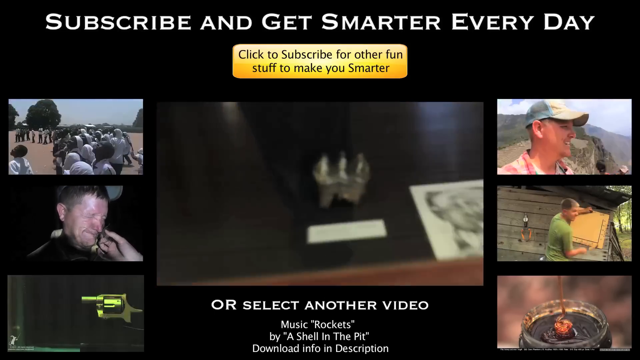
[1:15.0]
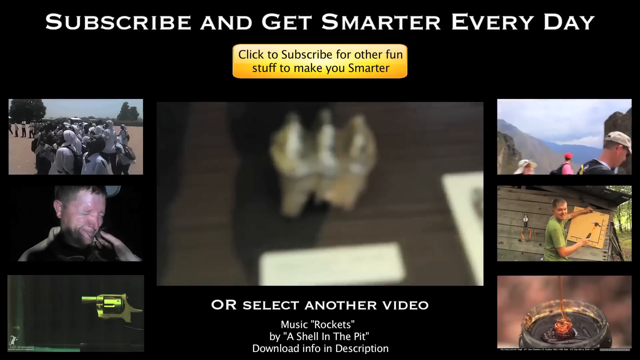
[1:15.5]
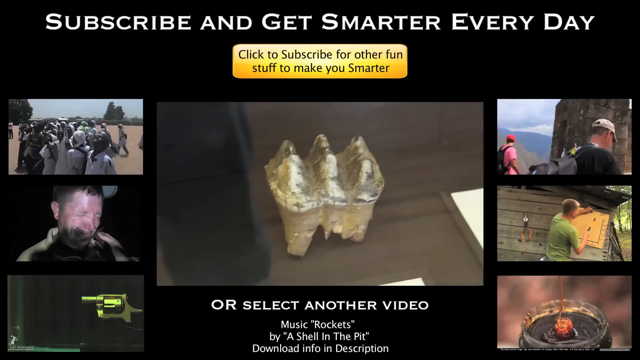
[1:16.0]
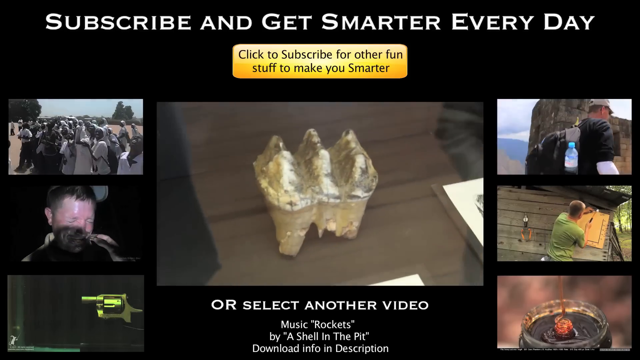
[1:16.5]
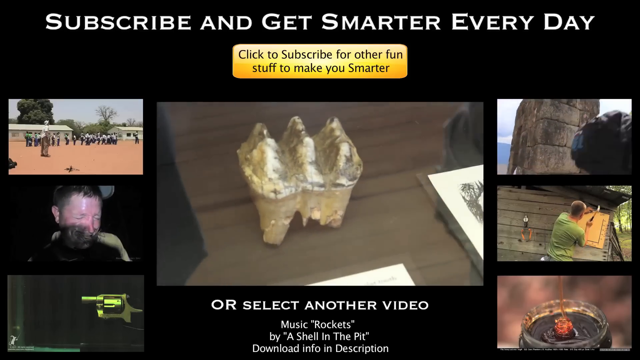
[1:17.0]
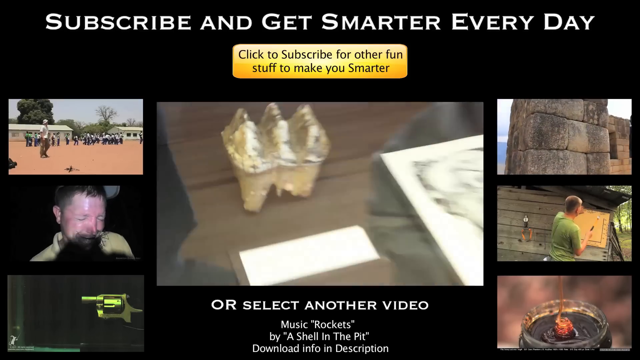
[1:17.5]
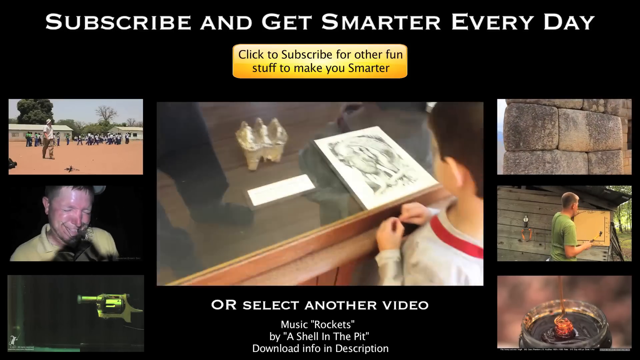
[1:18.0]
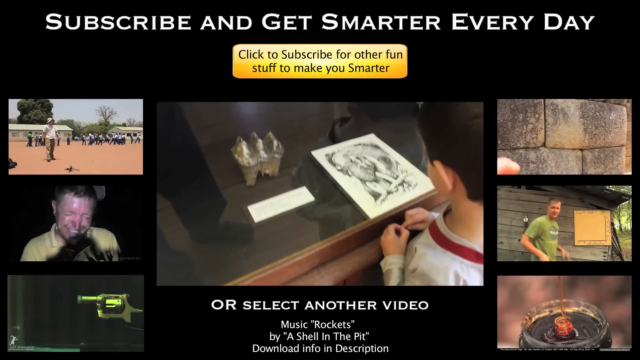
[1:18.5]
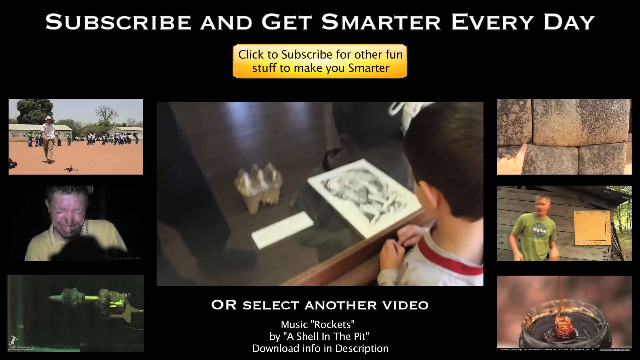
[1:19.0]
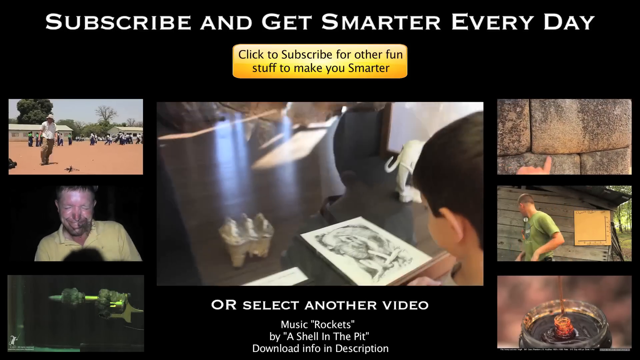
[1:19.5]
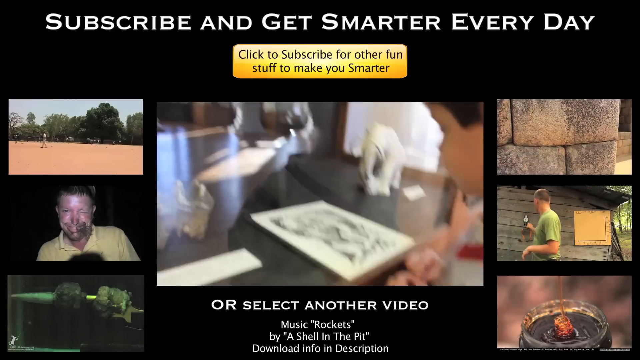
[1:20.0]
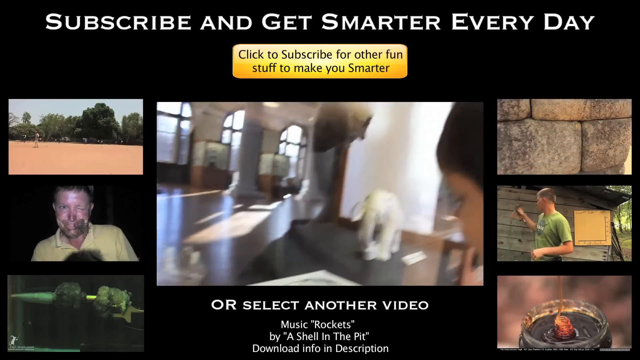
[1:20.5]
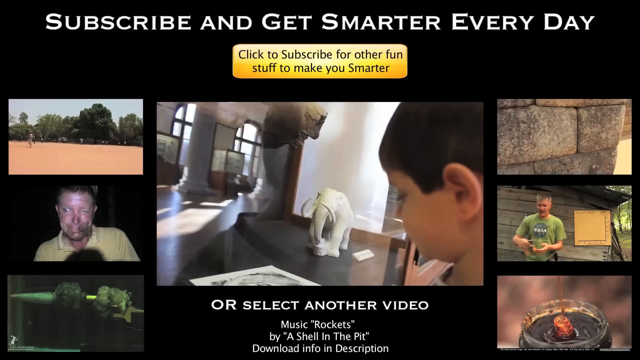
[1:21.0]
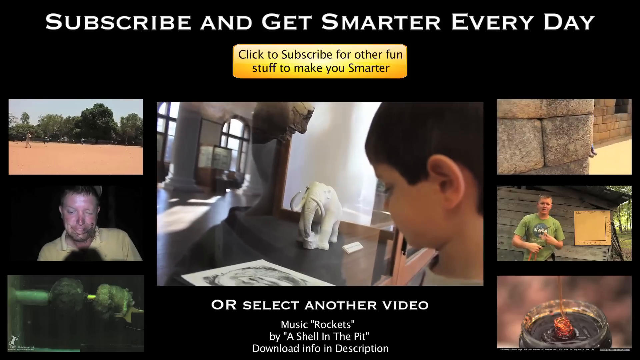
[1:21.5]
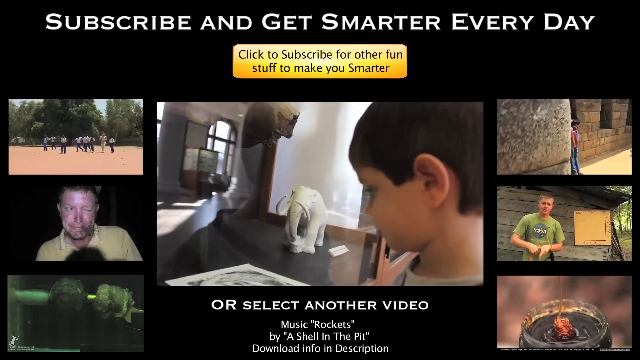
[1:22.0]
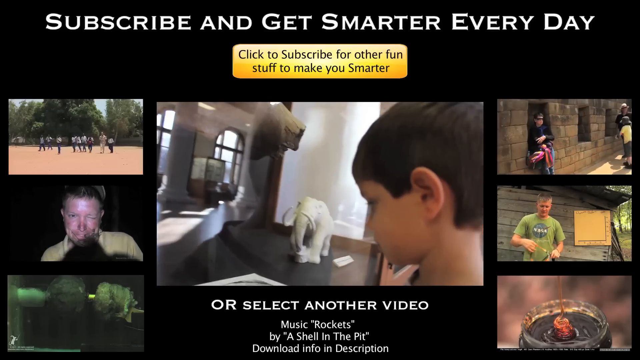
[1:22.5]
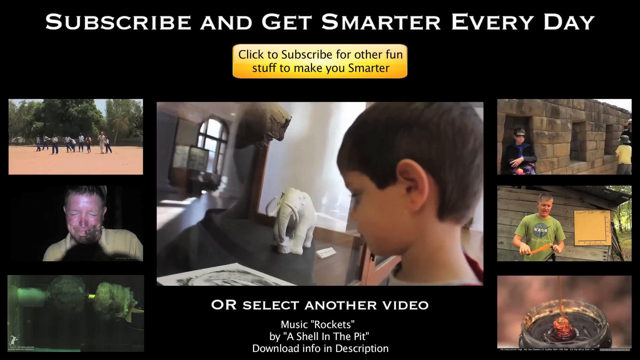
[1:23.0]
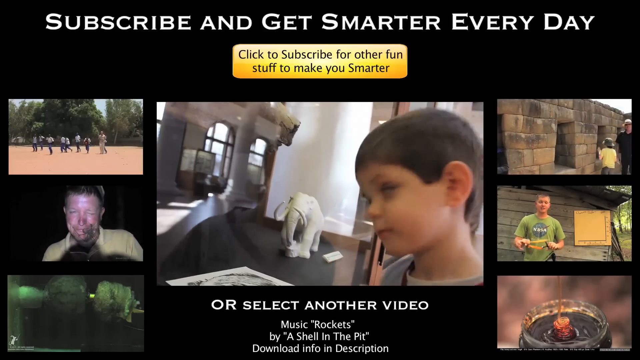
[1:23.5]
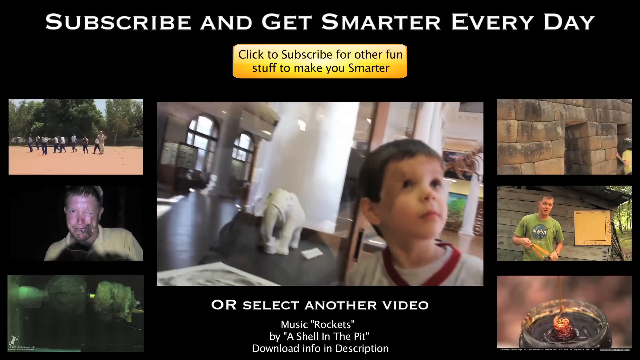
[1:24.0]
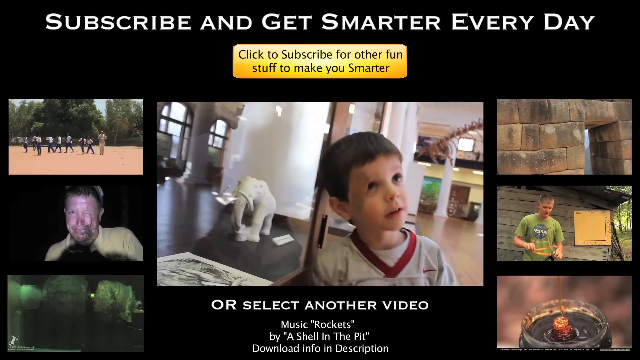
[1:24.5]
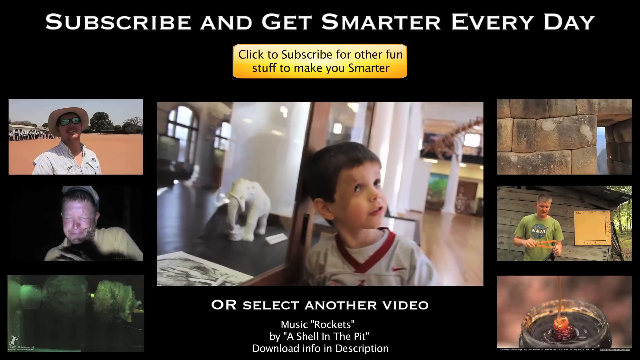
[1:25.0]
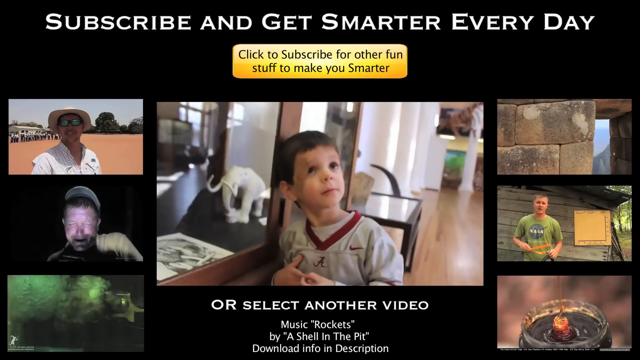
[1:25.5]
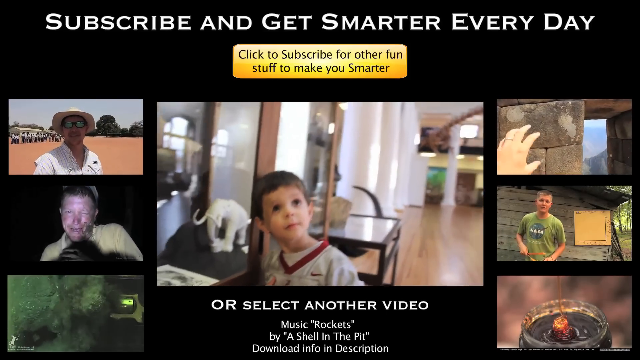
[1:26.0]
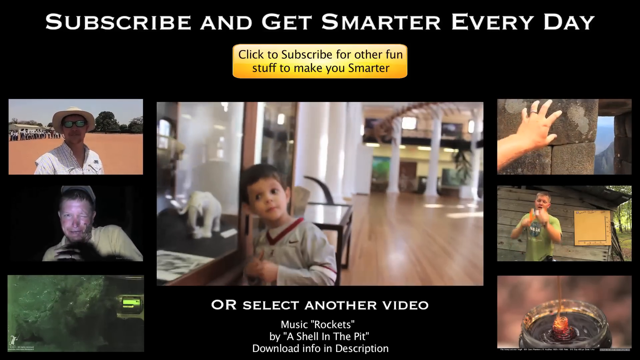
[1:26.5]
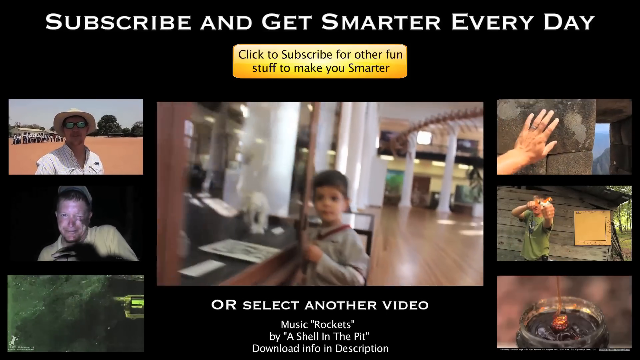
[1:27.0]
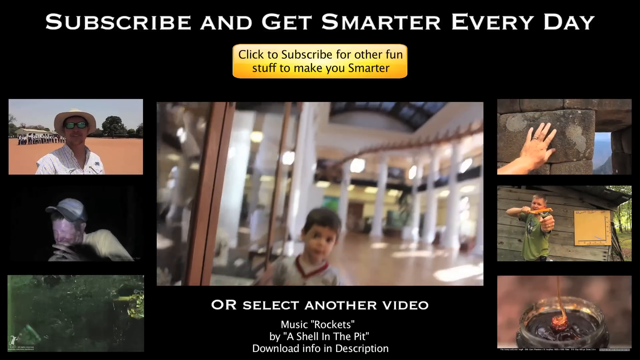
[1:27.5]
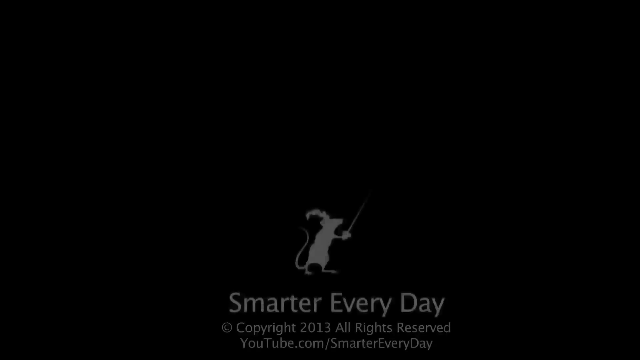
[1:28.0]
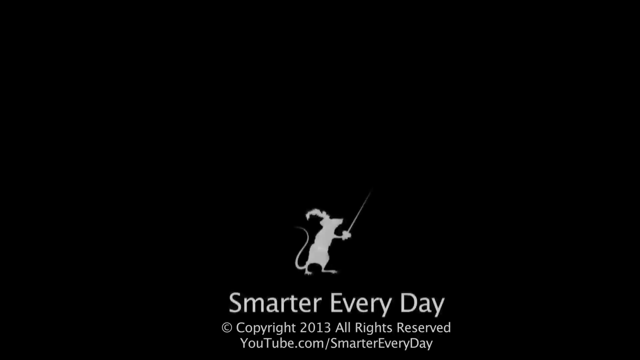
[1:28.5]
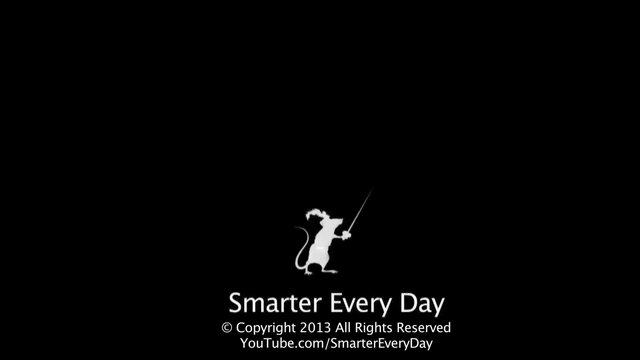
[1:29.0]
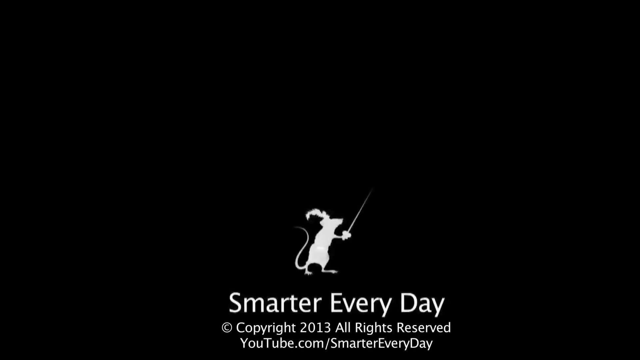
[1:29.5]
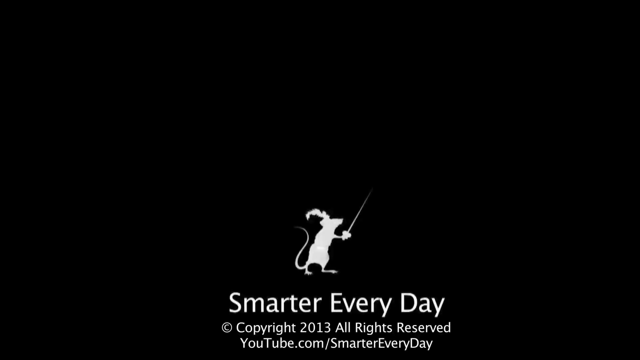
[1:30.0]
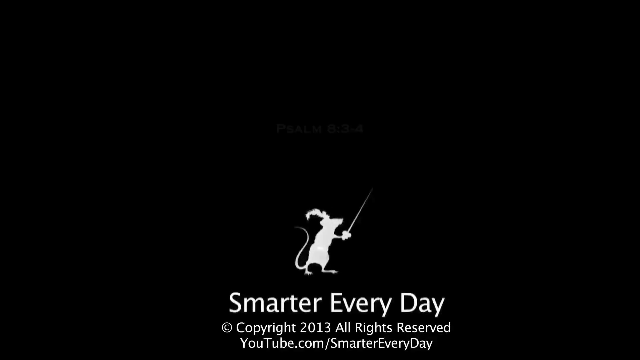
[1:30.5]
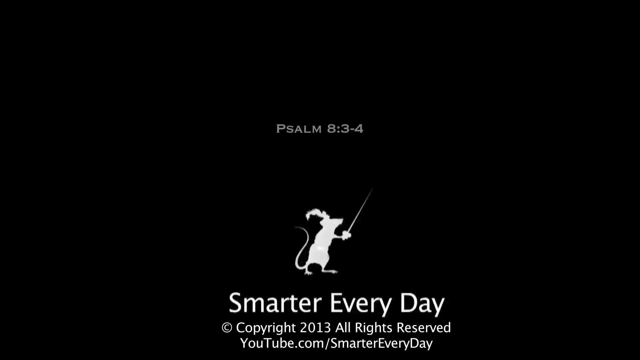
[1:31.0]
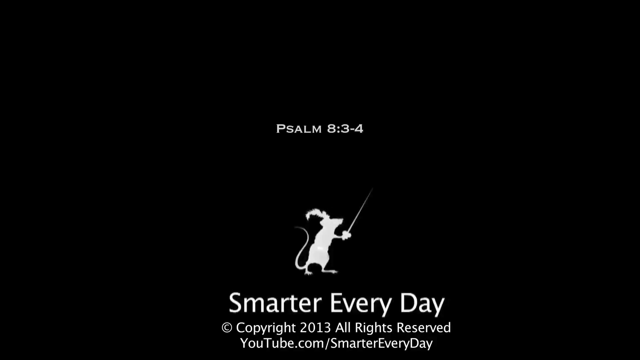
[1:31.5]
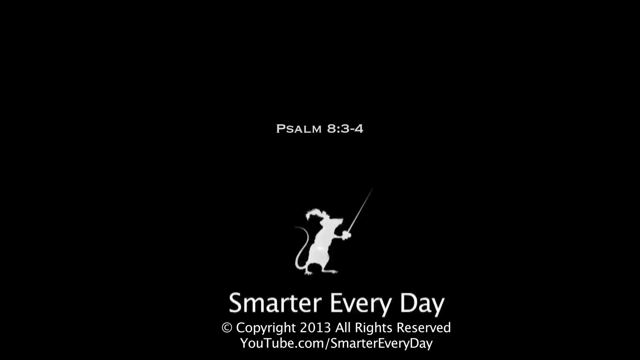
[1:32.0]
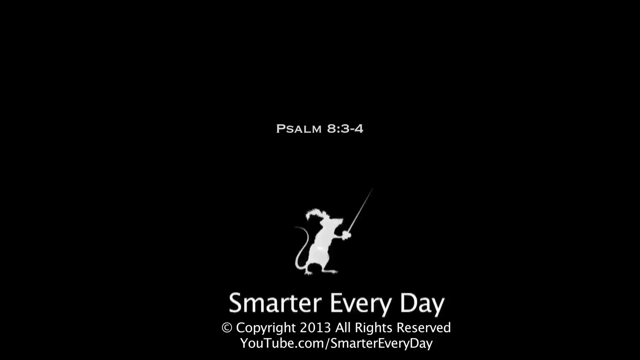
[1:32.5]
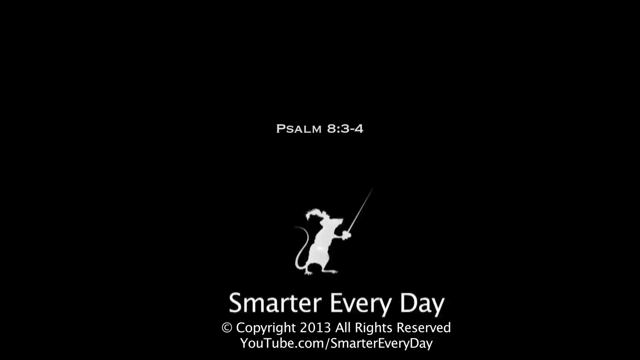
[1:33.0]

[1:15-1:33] Something in the sky appears, then the various screens: the largest one in the middle and smaller screens off to the side. In the middle, a little boy looks at an elephant display or something like it. A blank screen then shows a mouse with a sword and the text "smarter every day". The several screens return, the largest one in the center showing a boy looking at what looks like elephants, or possibly woolly mammoths; it is hard to tell. A sort of black screen with a mouse holding a sword follows, then the various screens again, with side pictures of a man in a green shirt, some people walking around what looks like some ruins, and a man in a hat talking. The black screen returns, with "smarter every day" underneath the mouse with the sword and "subscribe and get smarter every day" at the top, along with "select another video", and the pictures of the various videos with the largest one in the center appear again.